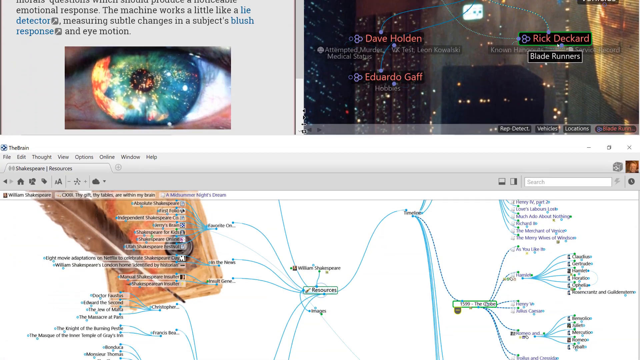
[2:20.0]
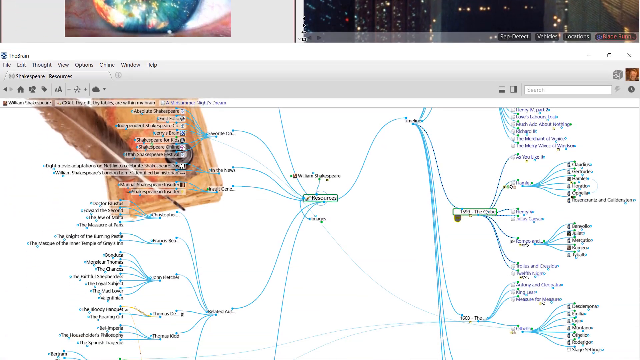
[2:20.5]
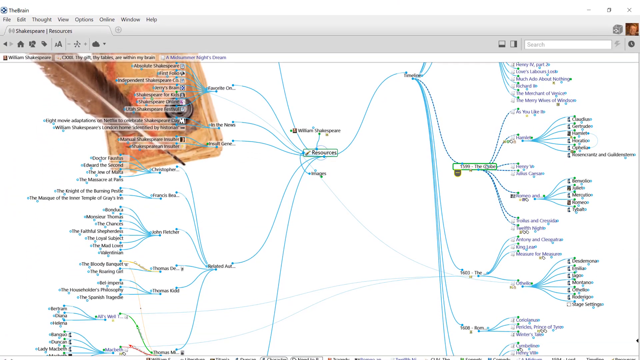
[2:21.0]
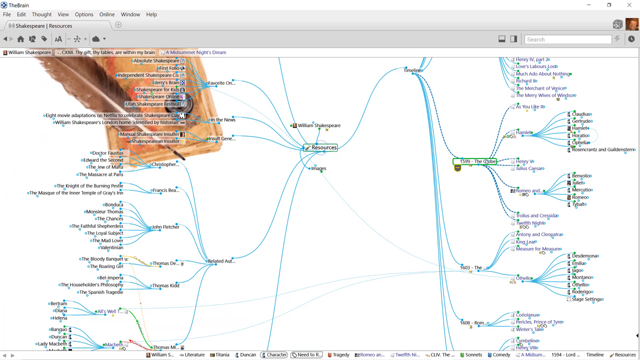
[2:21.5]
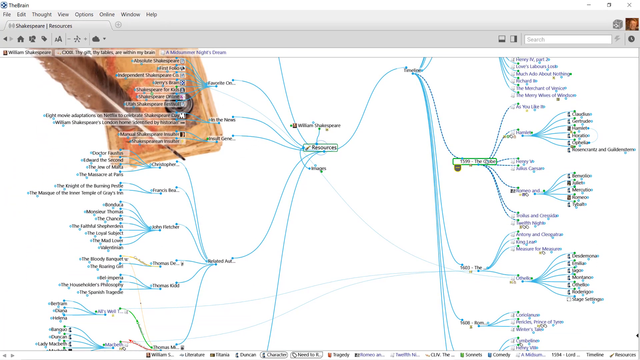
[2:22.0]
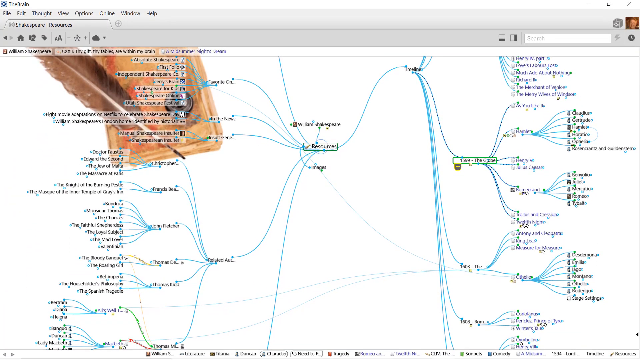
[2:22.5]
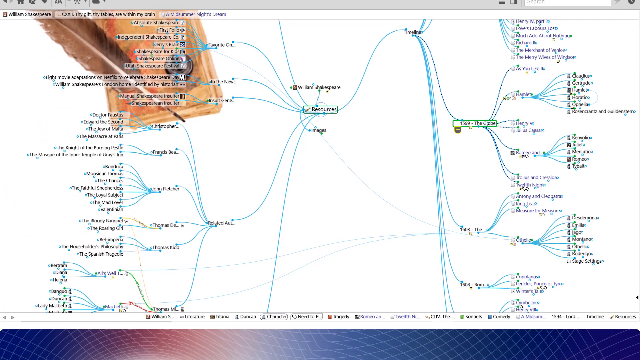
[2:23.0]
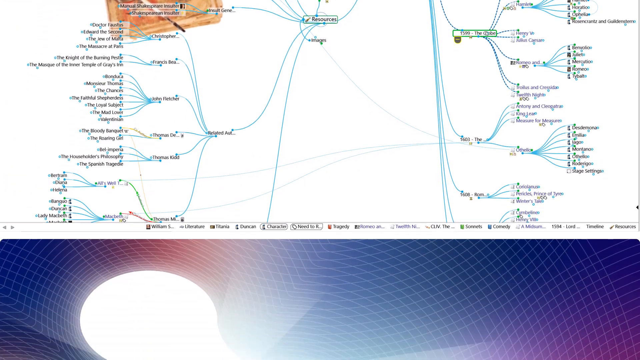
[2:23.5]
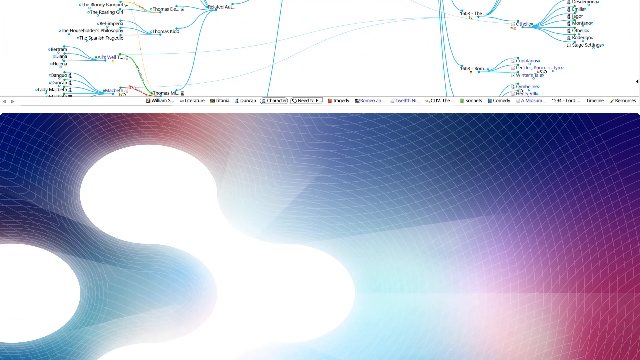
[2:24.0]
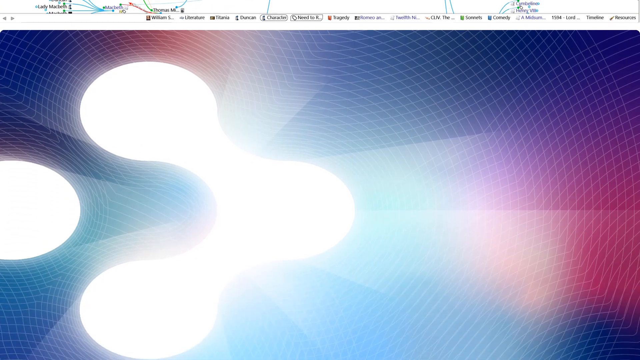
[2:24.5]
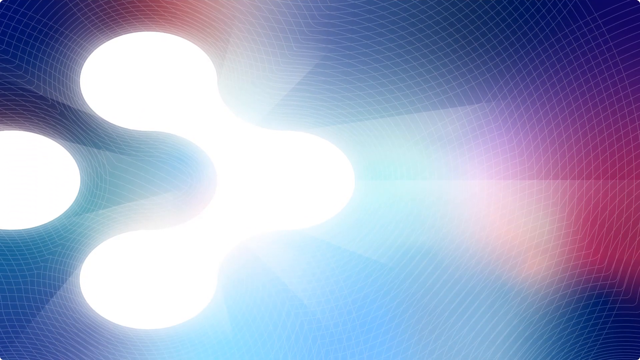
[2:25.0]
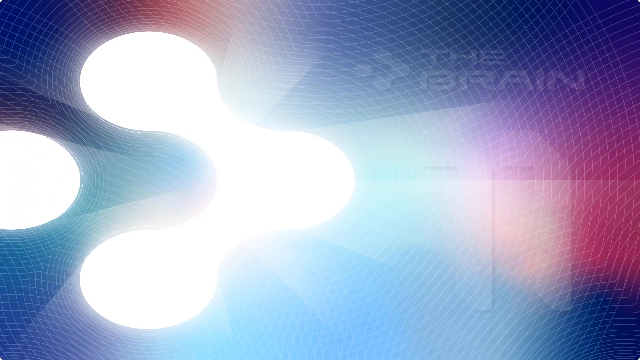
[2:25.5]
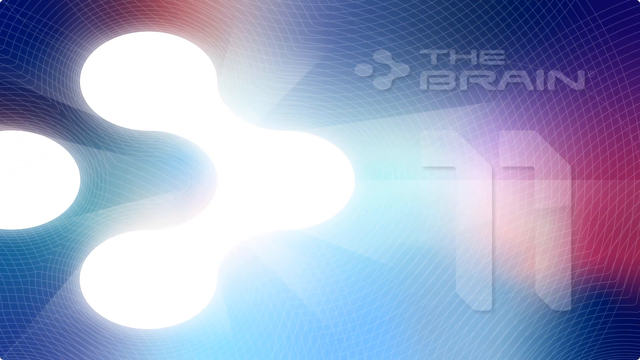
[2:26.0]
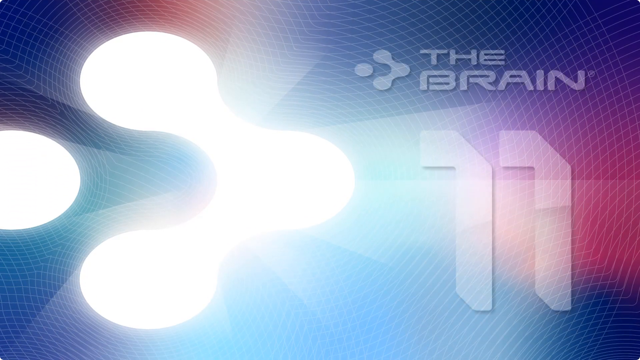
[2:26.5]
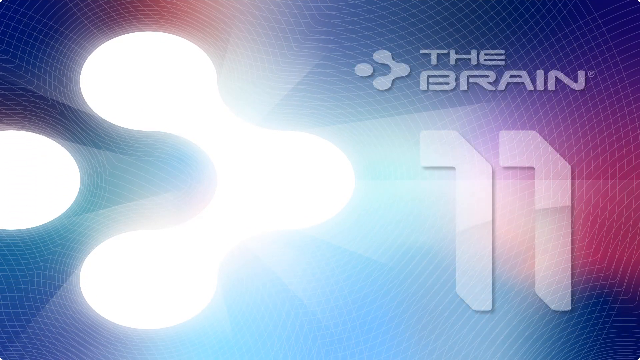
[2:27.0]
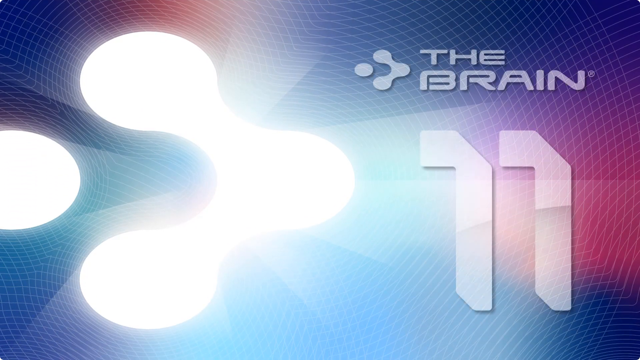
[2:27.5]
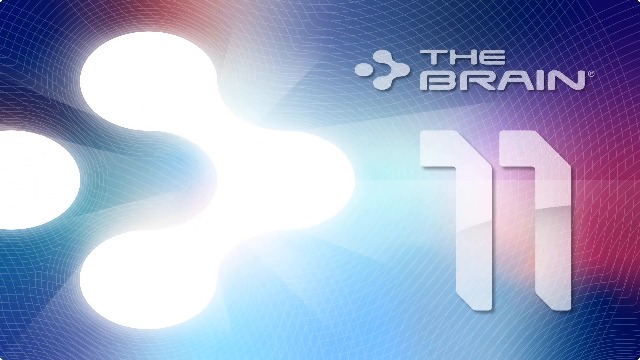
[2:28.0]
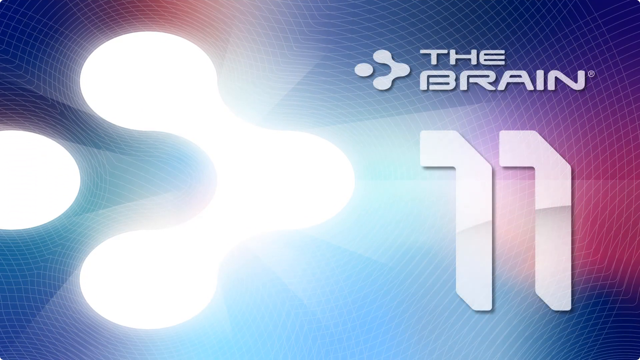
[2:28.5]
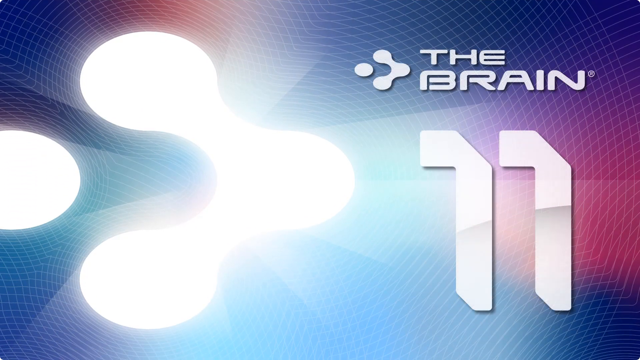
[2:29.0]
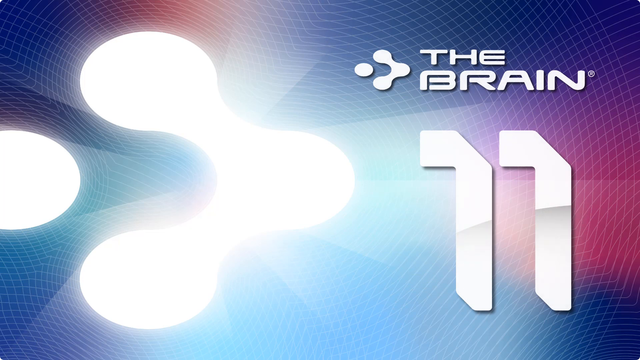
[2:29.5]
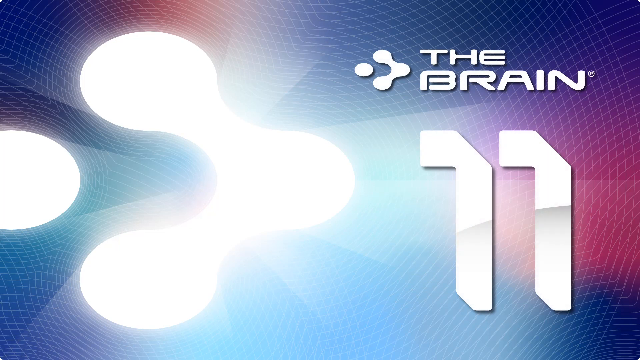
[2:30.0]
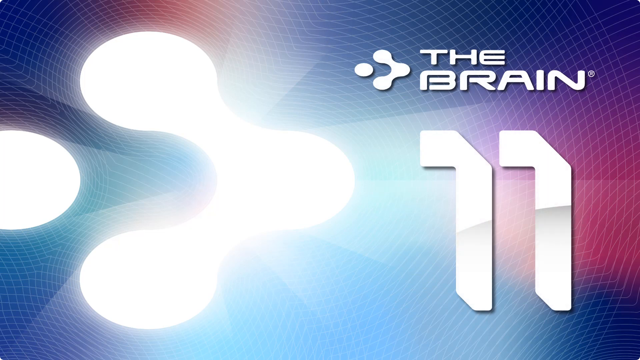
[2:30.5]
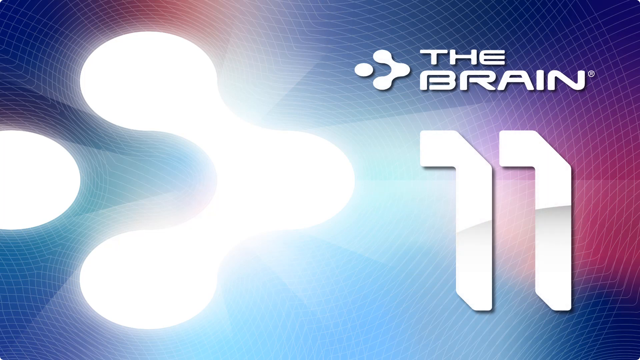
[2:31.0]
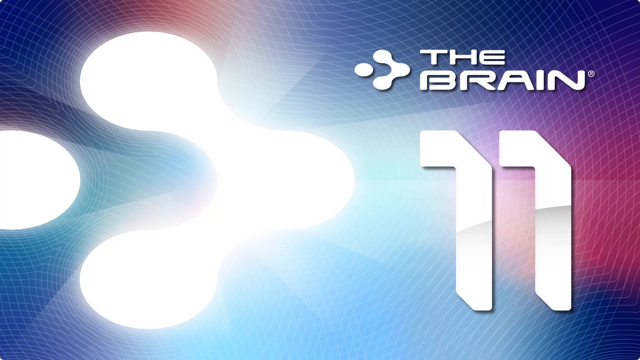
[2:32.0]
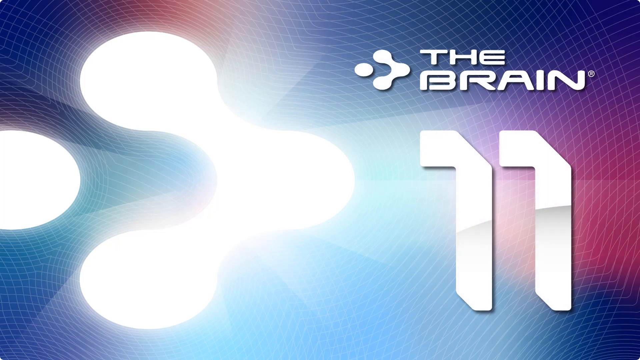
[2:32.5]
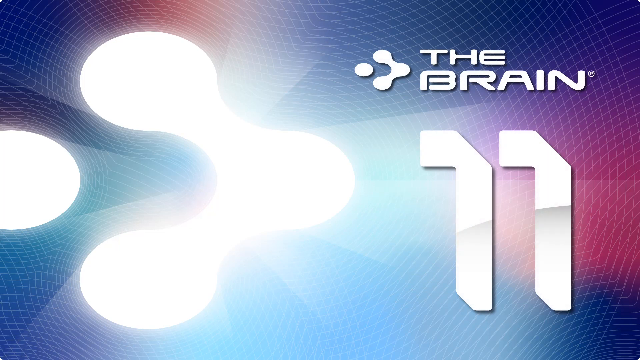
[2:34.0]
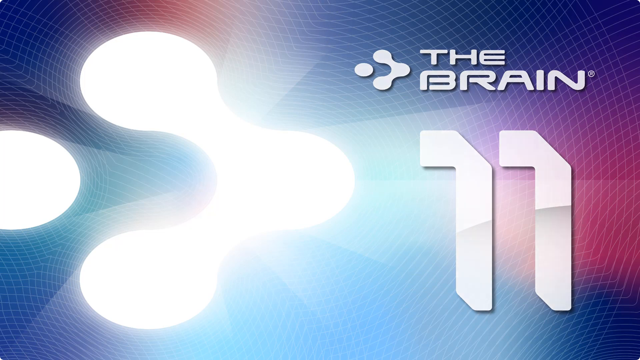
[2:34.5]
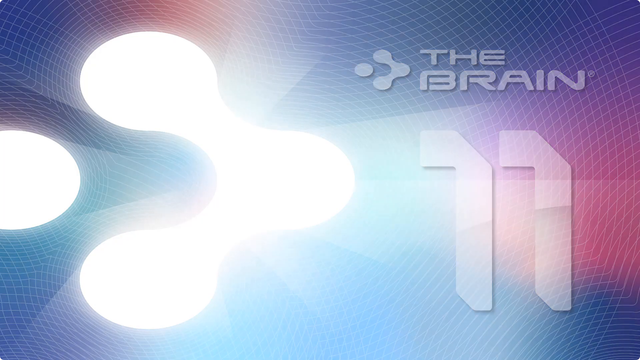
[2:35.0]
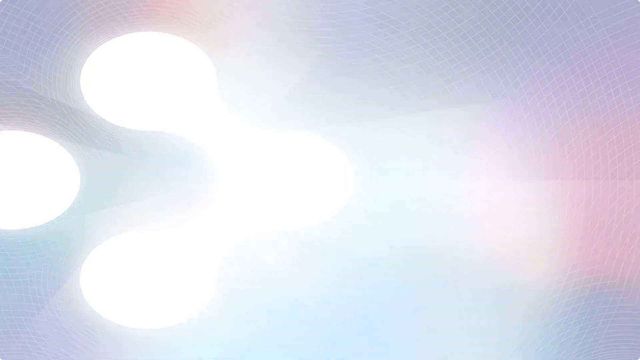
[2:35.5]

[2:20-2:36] The scene starts with what looks like an eye, continuing the Blade Runner section, and then moves to a very intricate, hard-to-read diagram. On a white background, a bunch of blue lines all start from "resources", with some text above and below it. To the right, the lines curve up and then drop down into probably three to five subsets, some with dotted and some with solid lines that cannot be made out. All the way to the left, behind this, is what looks like either an orange phone or a square fish with a feather, with googly eyes attached and a brown feather, and the same on another one with a bunch of subsets. The view scrolls down again, returning to where the video started: "the brain" fades in, all capitalized, with the white lava lamp-like logo to the left and large numbers "1 1" underneath. The design is a red, bluish and purple gridded pattern, almost like a kaleidoscope. It then fades out to white.